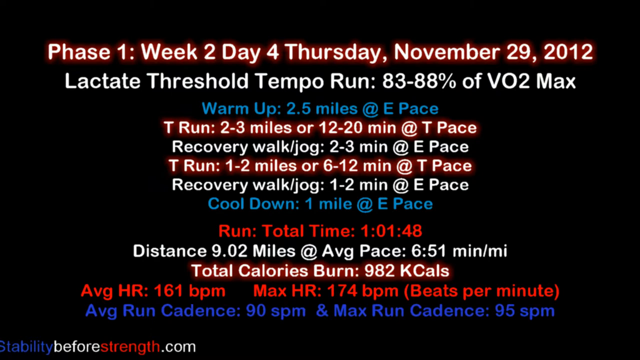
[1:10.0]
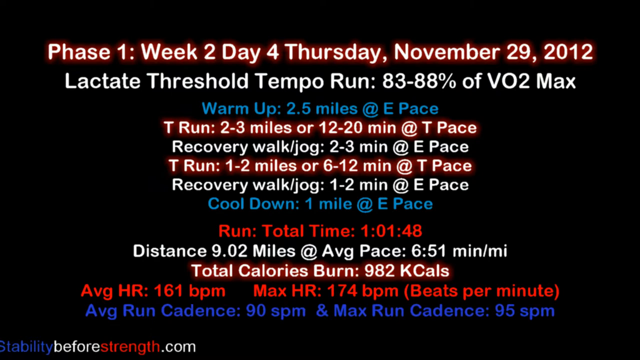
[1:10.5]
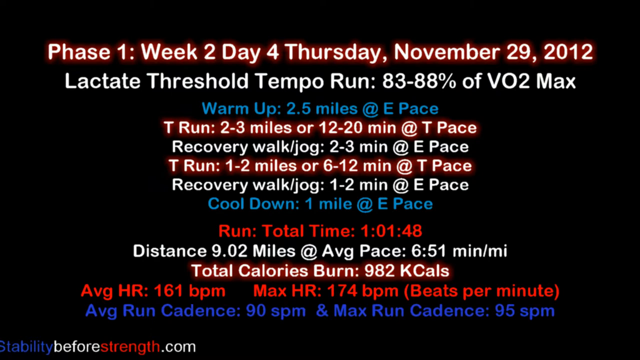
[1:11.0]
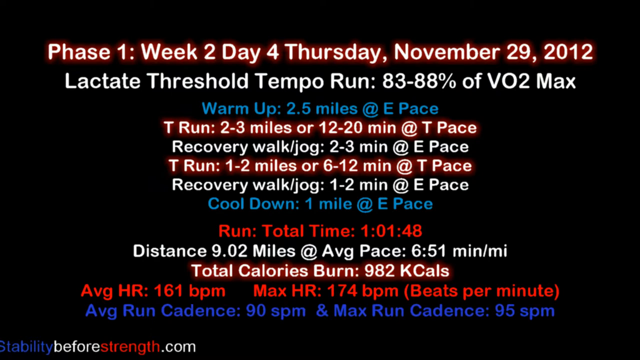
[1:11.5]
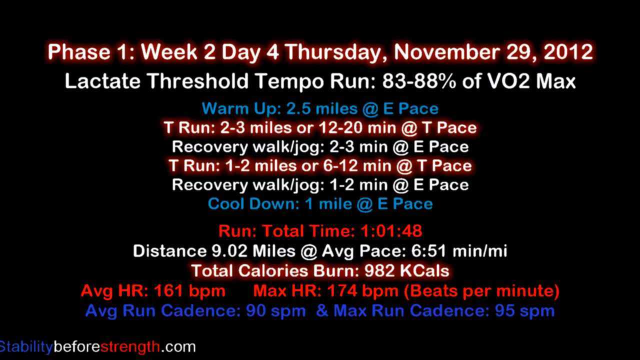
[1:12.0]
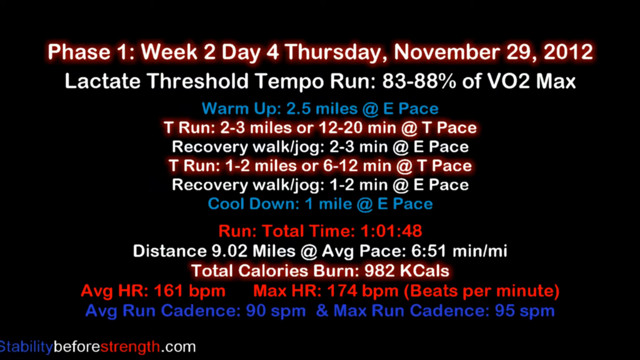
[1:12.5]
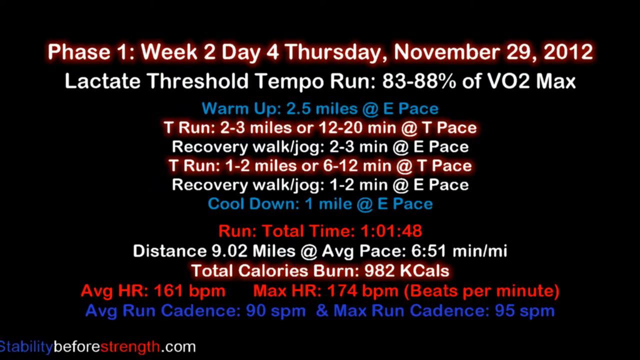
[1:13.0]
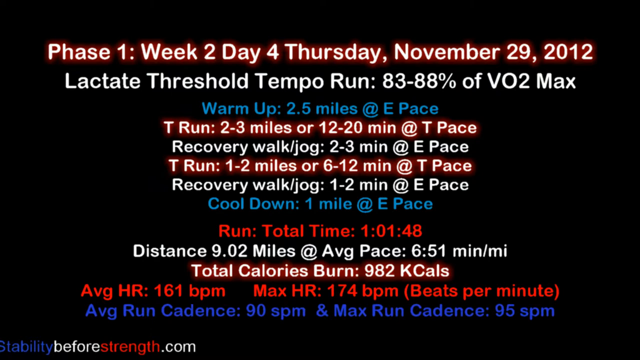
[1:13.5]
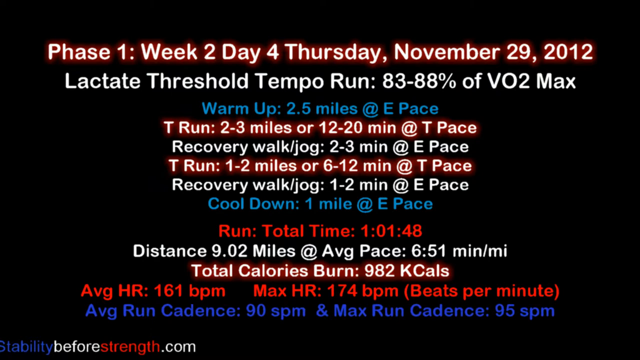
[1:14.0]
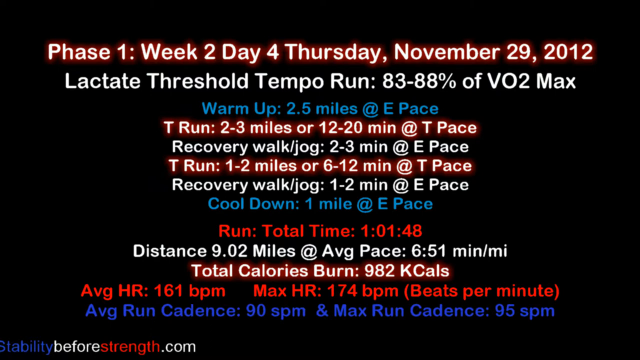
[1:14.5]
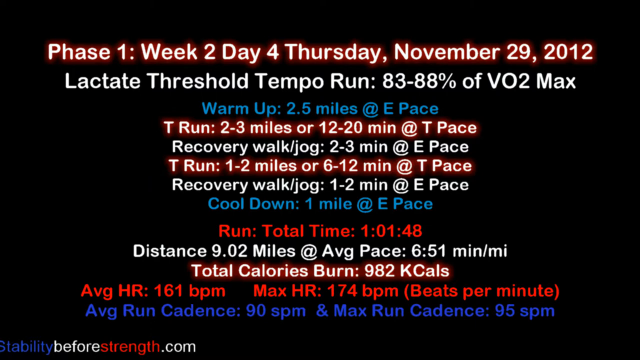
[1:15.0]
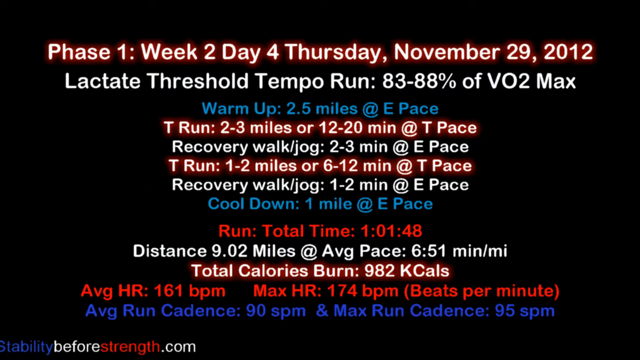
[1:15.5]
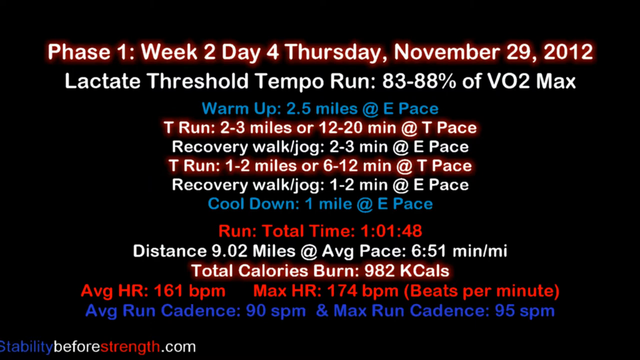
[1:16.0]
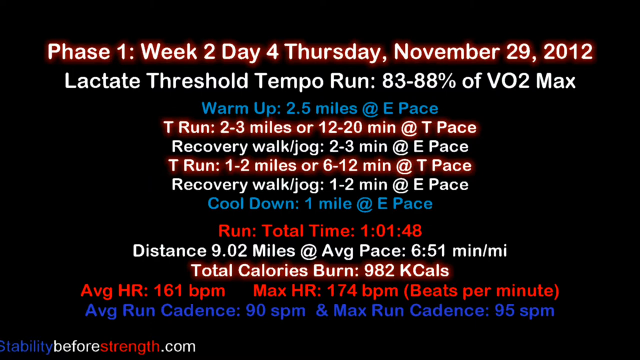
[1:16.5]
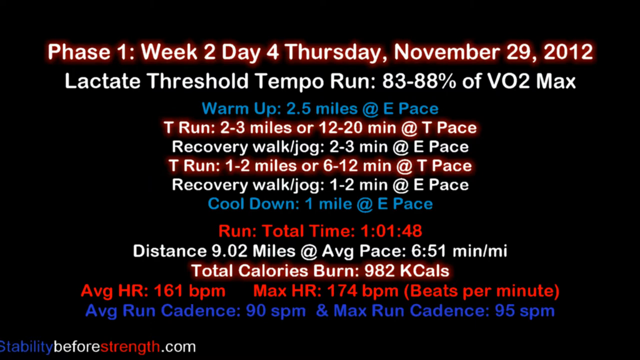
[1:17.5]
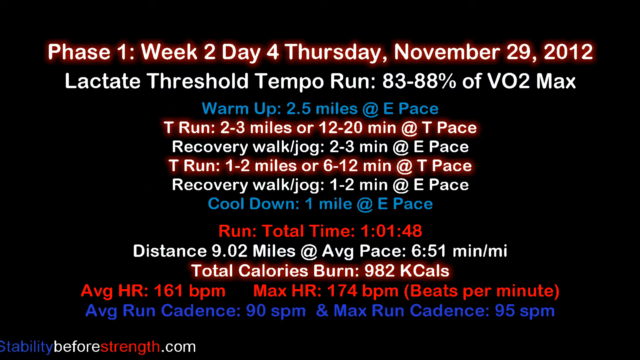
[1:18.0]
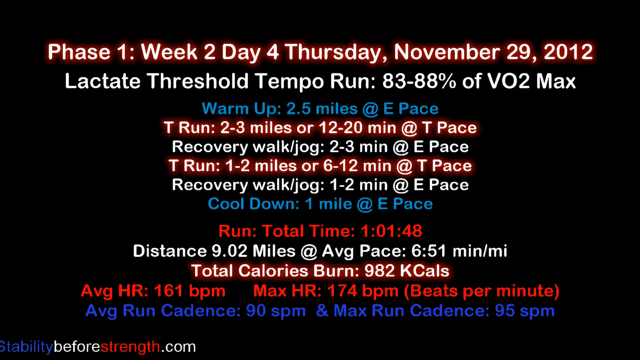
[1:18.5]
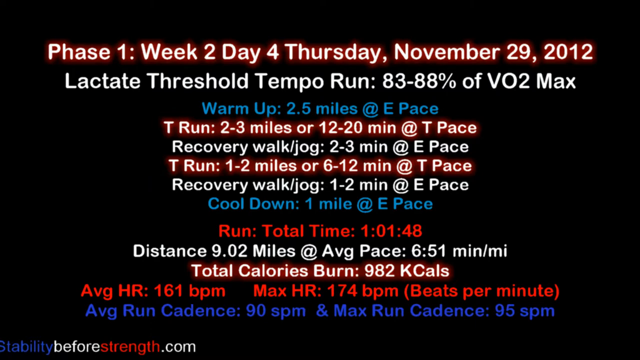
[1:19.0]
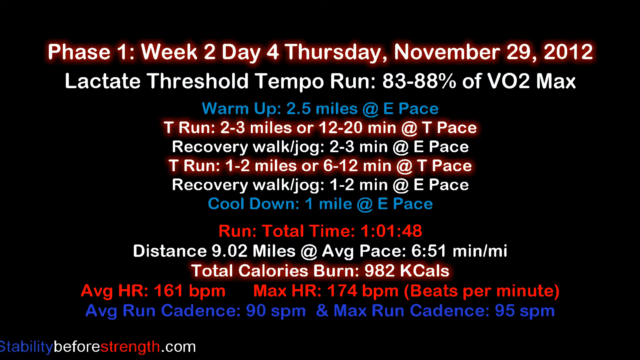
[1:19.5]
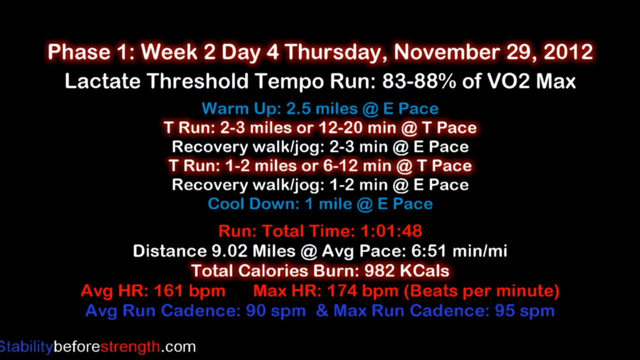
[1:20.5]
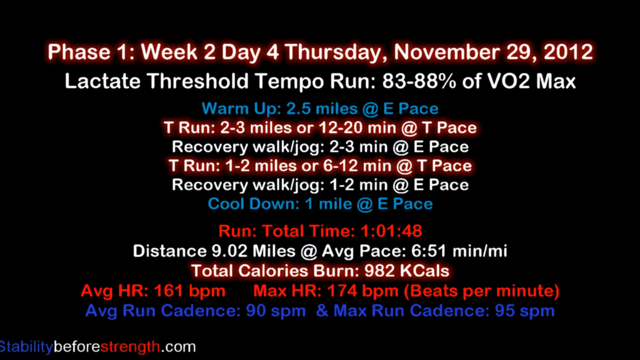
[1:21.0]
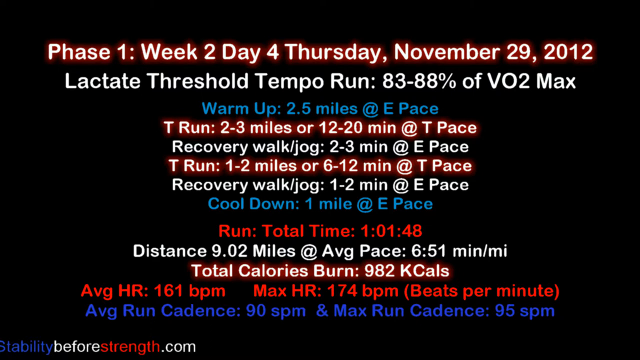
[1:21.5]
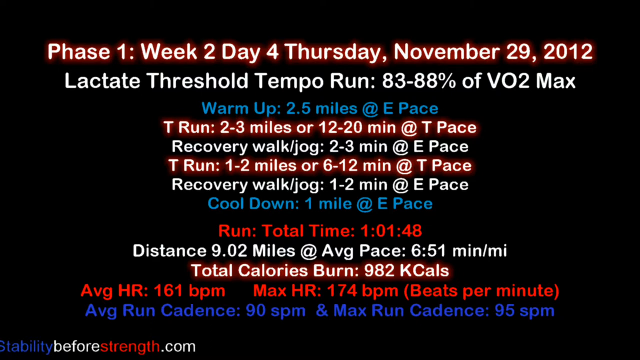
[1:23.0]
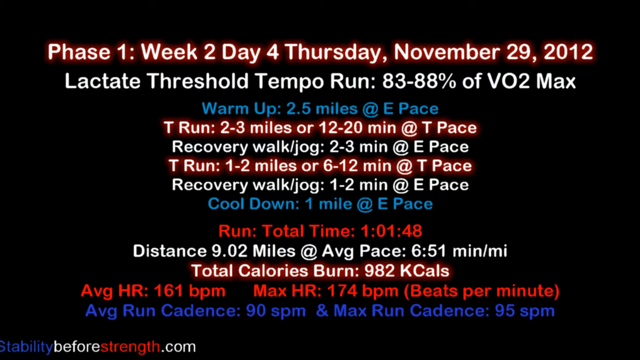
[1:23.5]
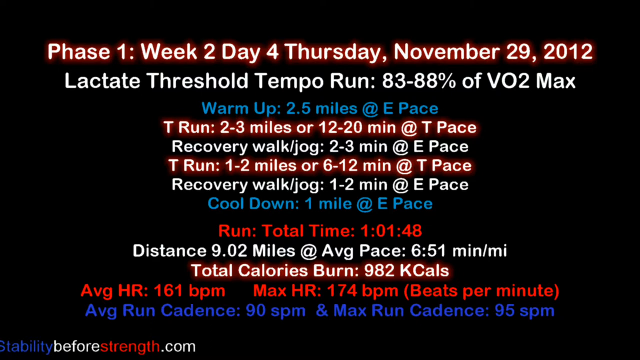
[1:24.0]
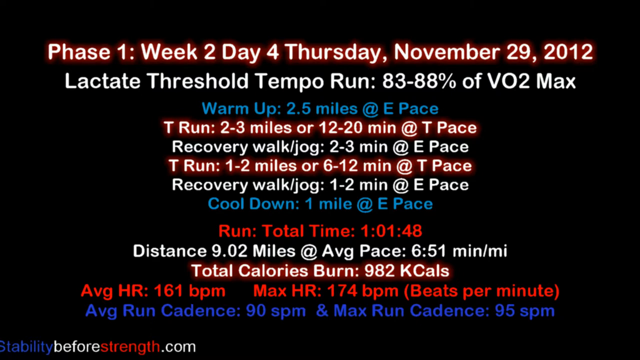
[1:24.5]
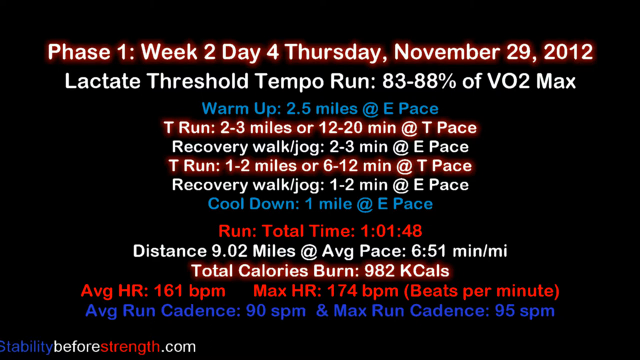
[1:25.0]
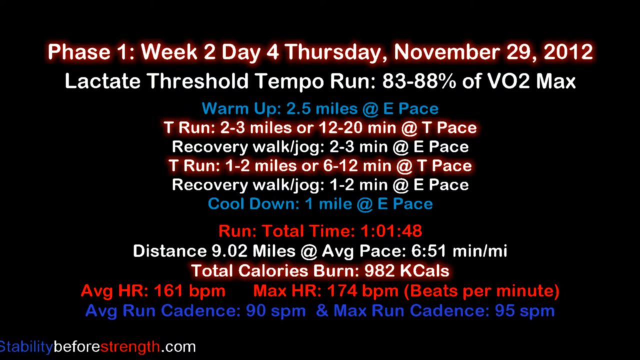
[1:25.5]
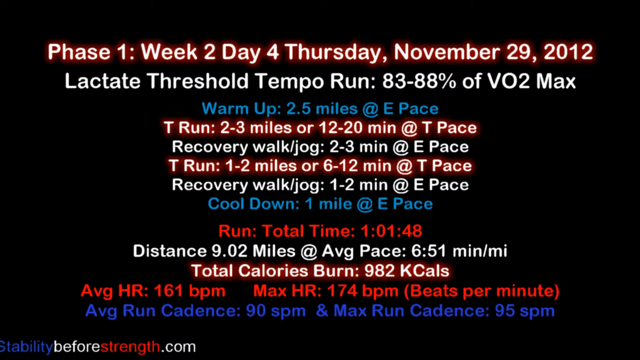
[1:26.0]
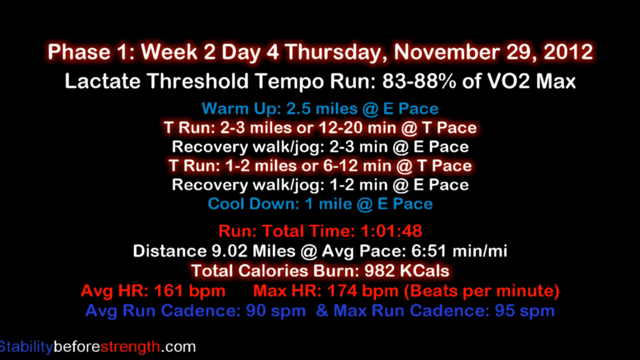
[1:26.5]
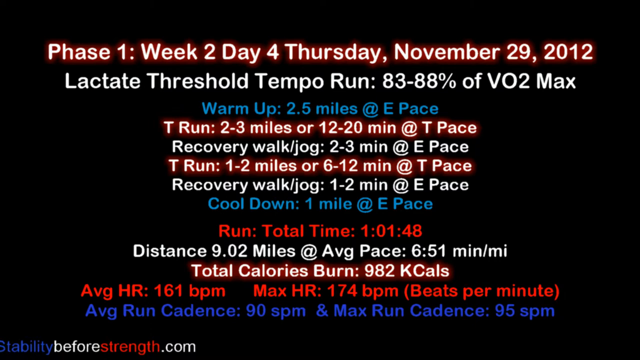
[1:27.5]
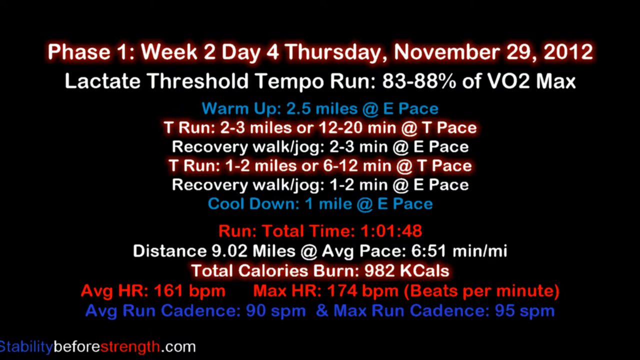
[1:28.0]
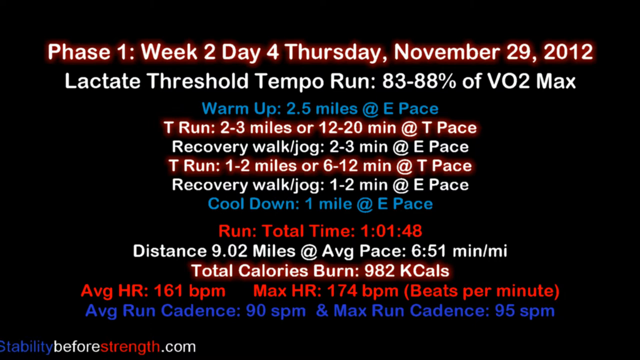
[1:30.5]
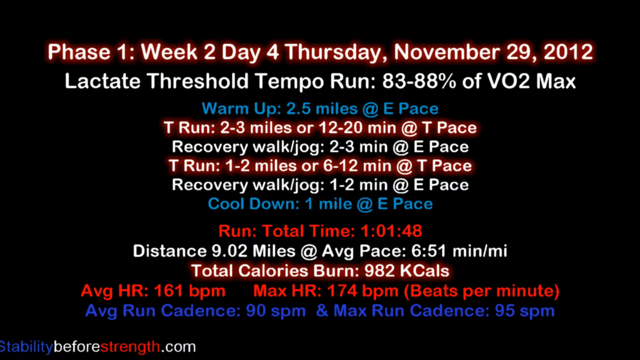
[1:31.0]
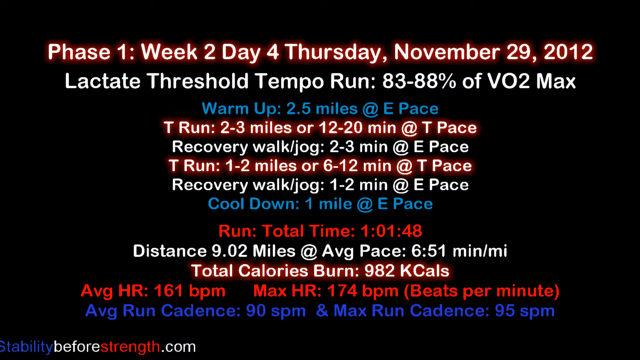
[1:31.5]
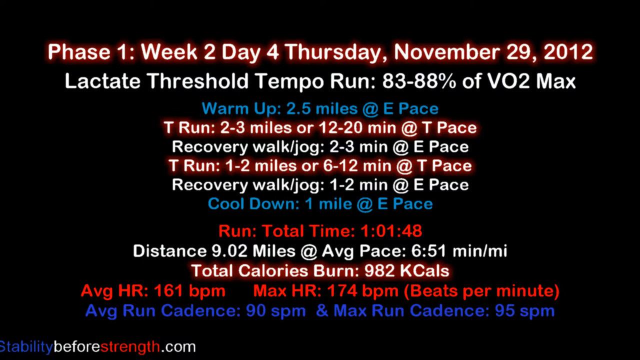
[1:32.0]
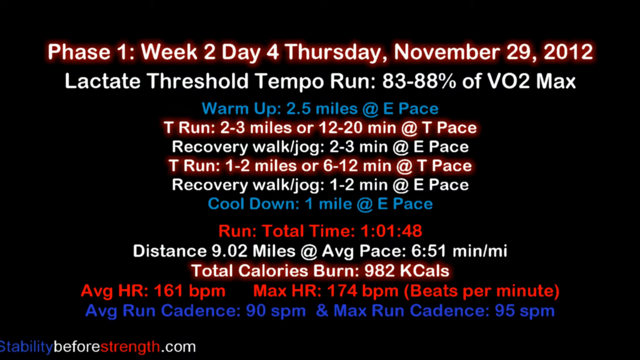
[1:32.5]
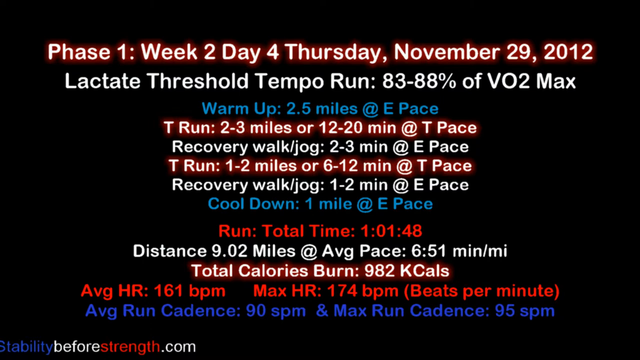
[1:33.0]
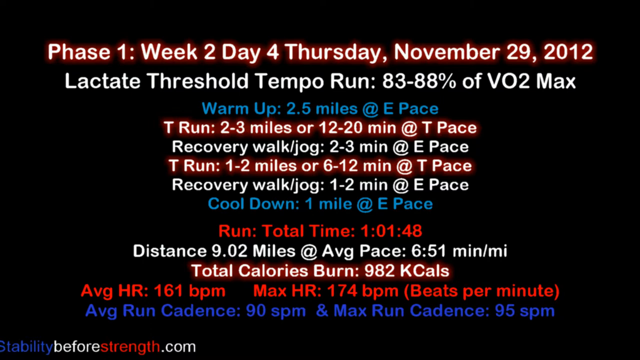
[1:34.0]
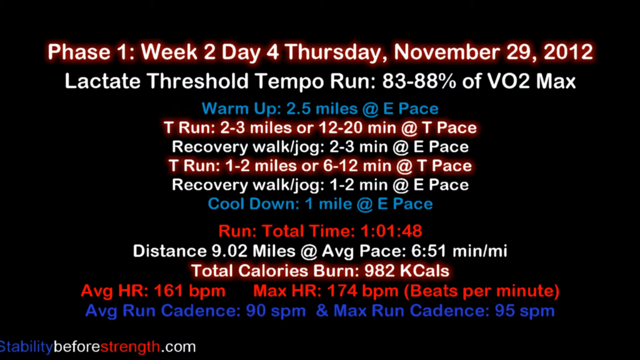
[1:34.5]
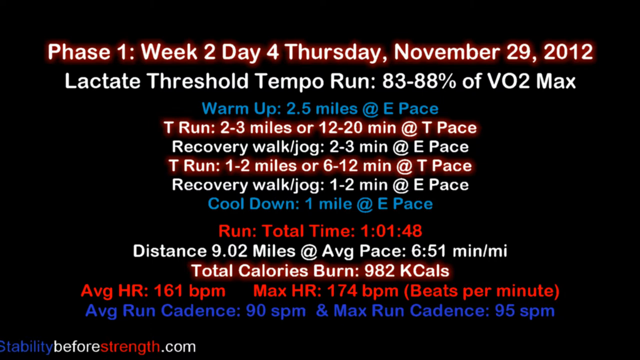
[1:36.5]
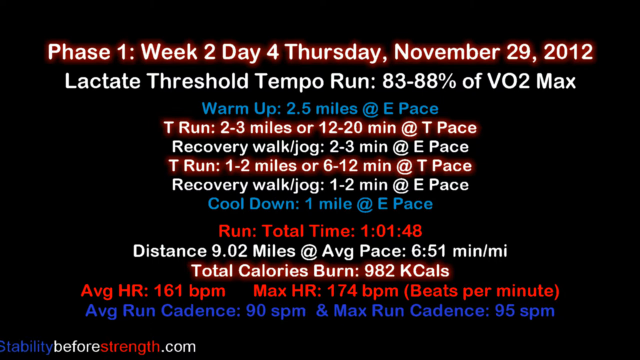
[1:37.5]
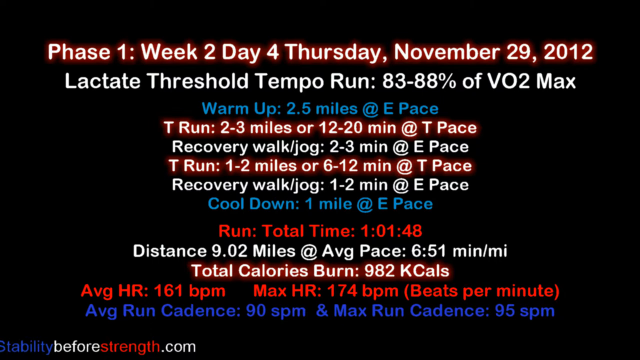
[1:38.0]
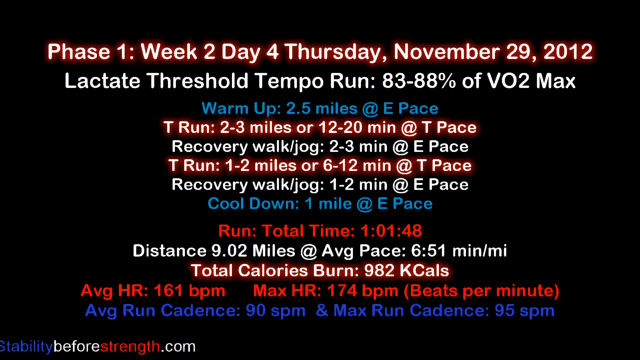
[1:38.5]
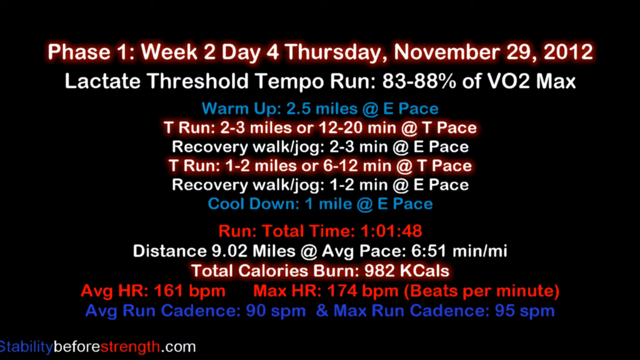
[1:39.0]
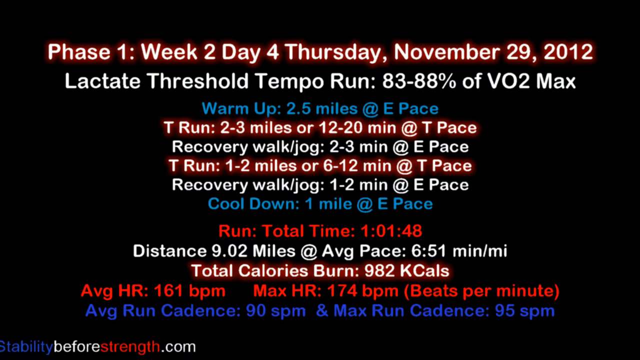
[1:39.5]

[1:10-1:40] The phase one, week two page stays on screen, seemingly giving plenty of time to read it. It sets out a schedule: a warm-up for 2.5 miles at E pace; a run of 2 to 3 miles, or 12 to 20 minutes, at T pace; a recovery walk or jog for 2 to 3 minutes at E pace; another run of 1 to 2 miles, or 6 to 12 minutes, at T pace; a final recovery walk or jog for 1 to 2 minutes at E pace; and a cool-down of 1 mile at E pace. The screen does not say what T pace and E pace are.